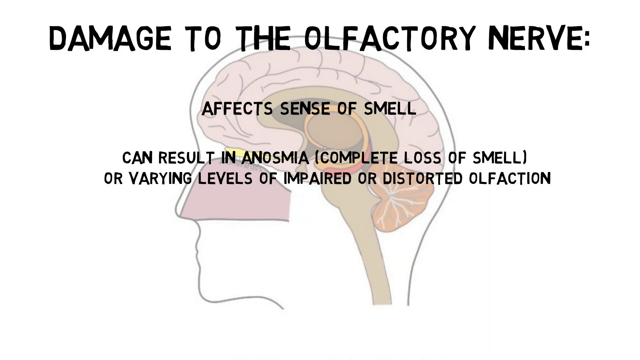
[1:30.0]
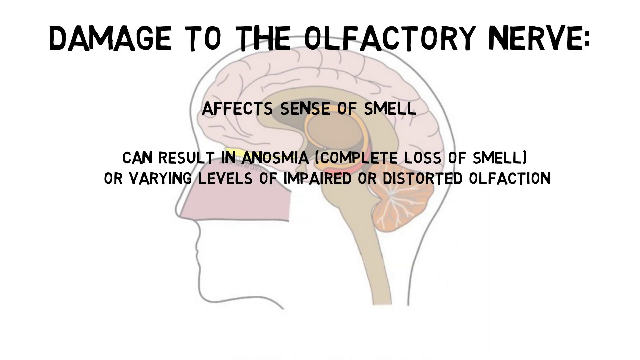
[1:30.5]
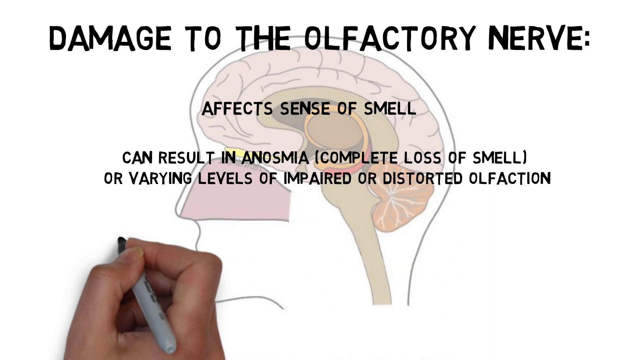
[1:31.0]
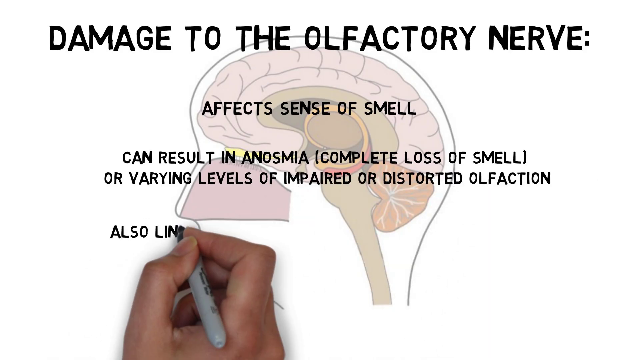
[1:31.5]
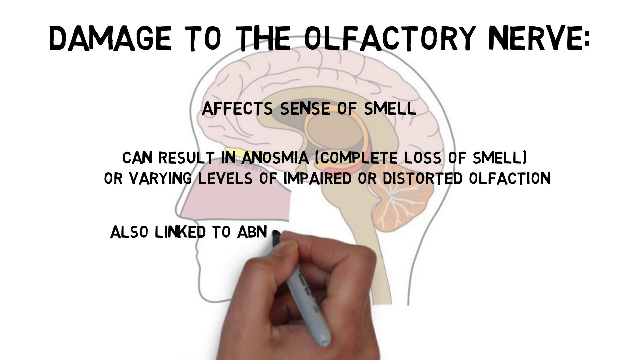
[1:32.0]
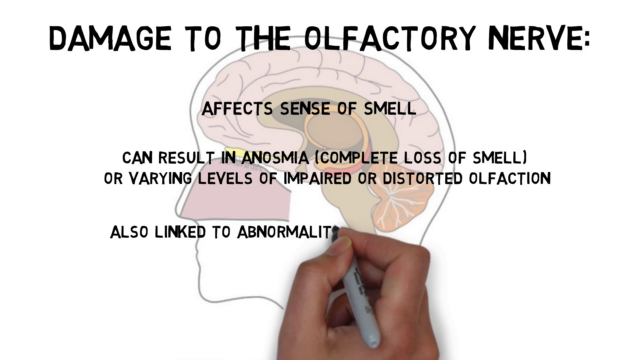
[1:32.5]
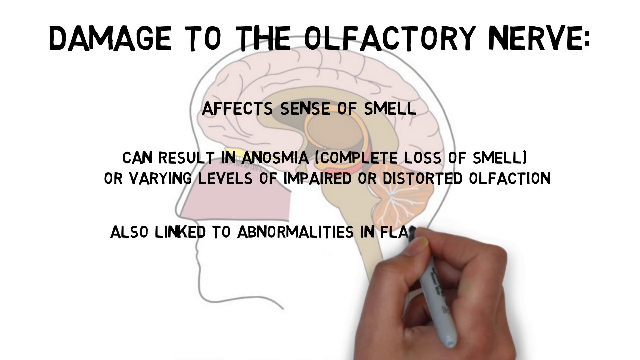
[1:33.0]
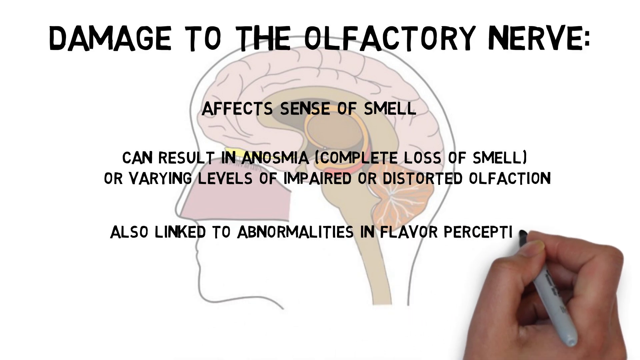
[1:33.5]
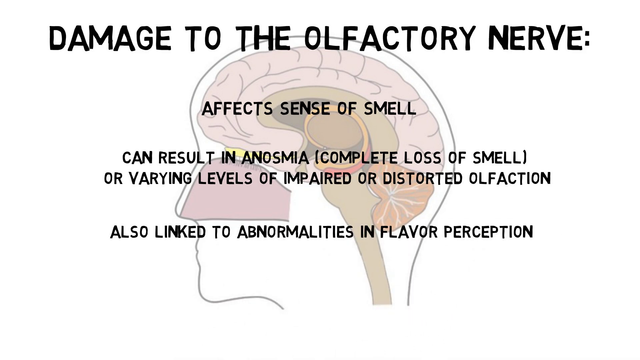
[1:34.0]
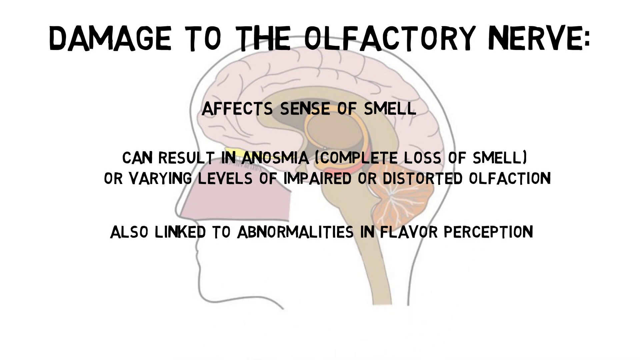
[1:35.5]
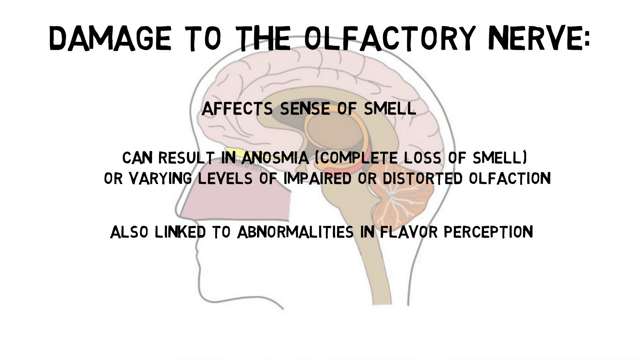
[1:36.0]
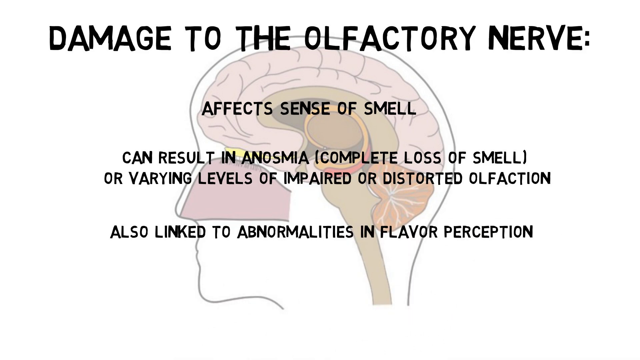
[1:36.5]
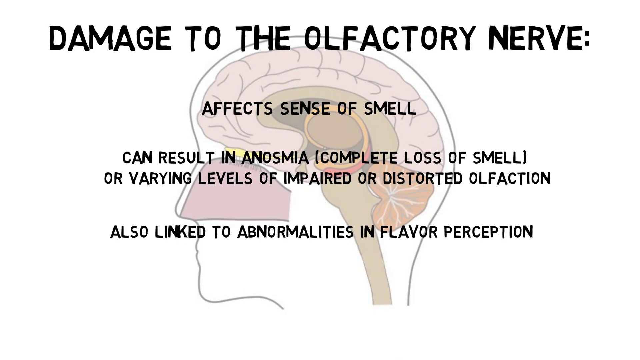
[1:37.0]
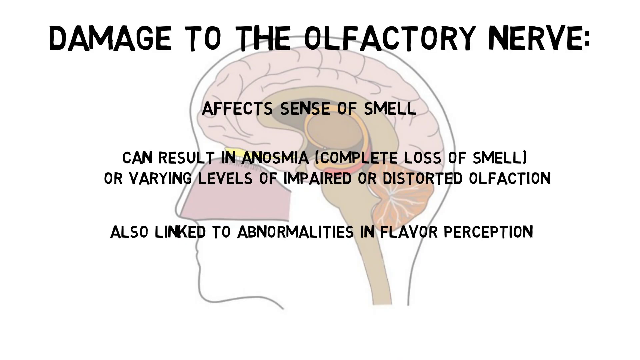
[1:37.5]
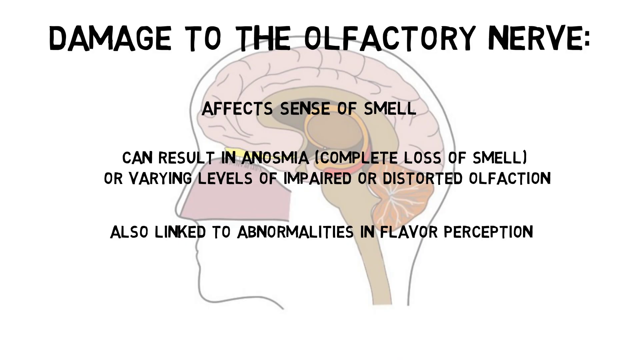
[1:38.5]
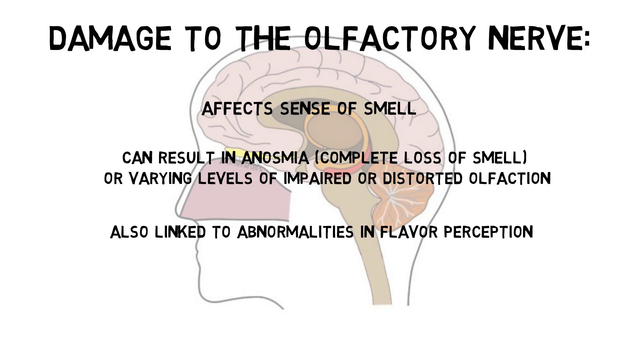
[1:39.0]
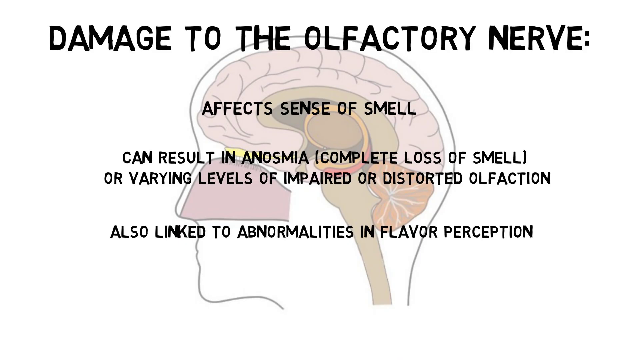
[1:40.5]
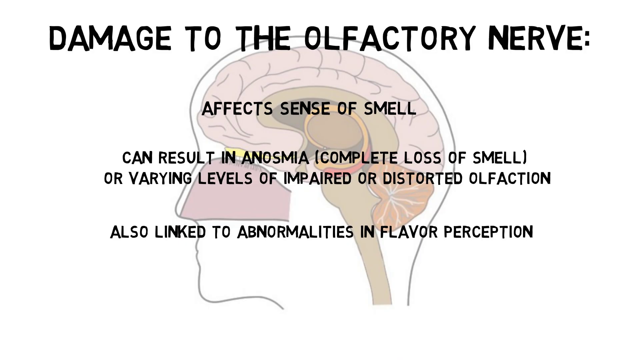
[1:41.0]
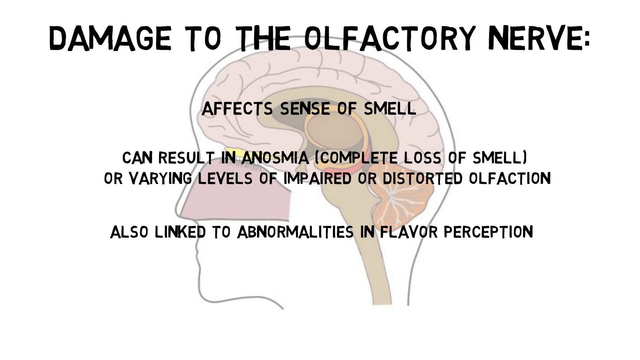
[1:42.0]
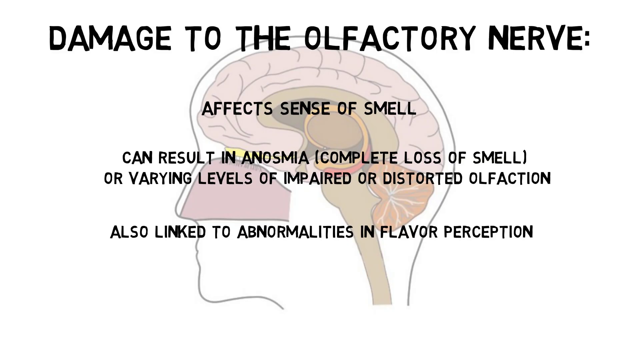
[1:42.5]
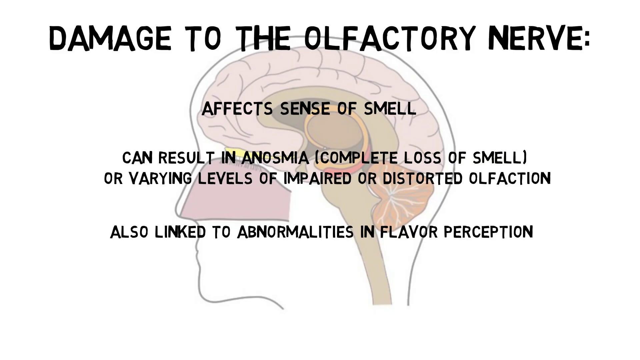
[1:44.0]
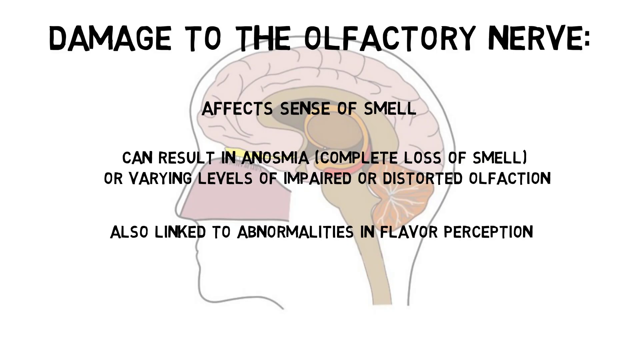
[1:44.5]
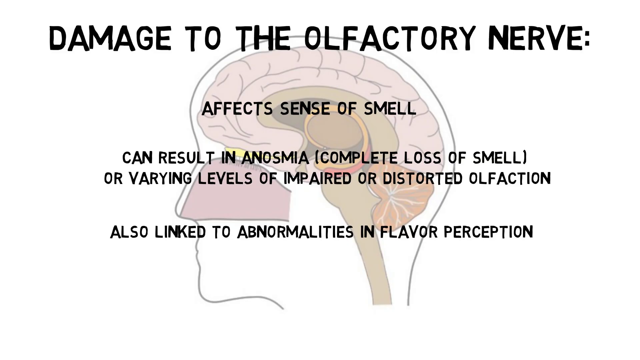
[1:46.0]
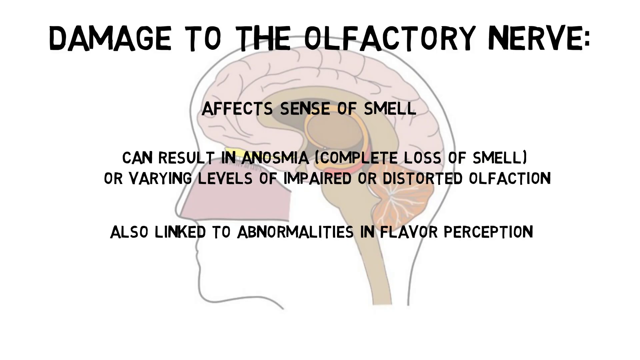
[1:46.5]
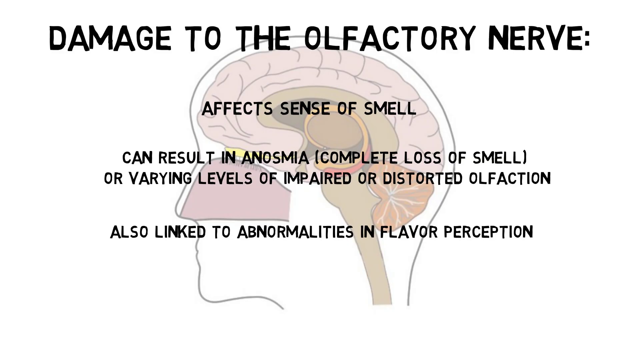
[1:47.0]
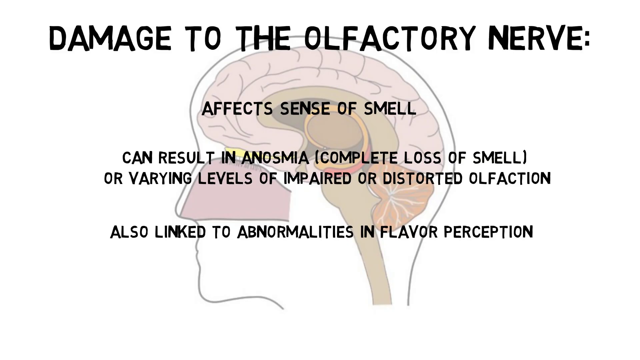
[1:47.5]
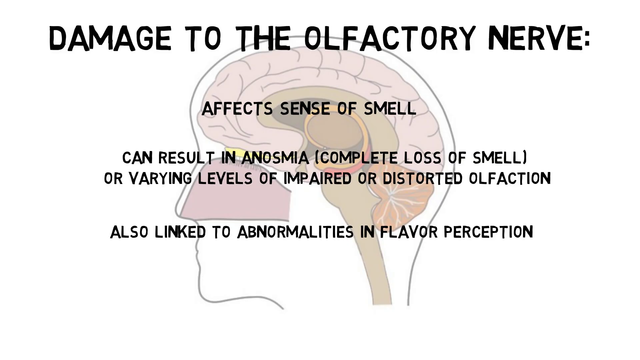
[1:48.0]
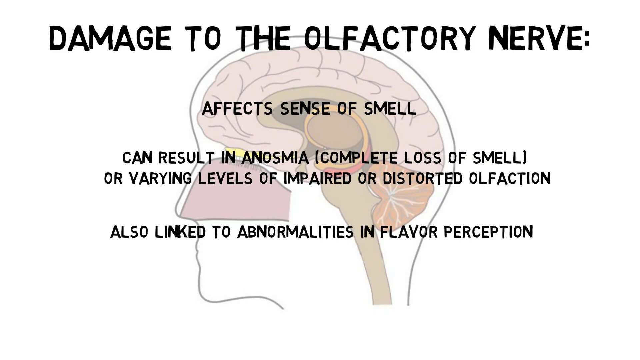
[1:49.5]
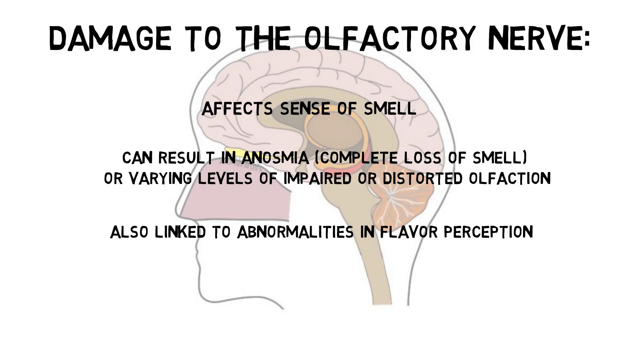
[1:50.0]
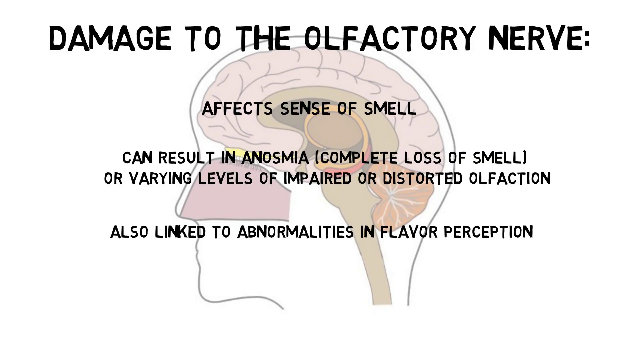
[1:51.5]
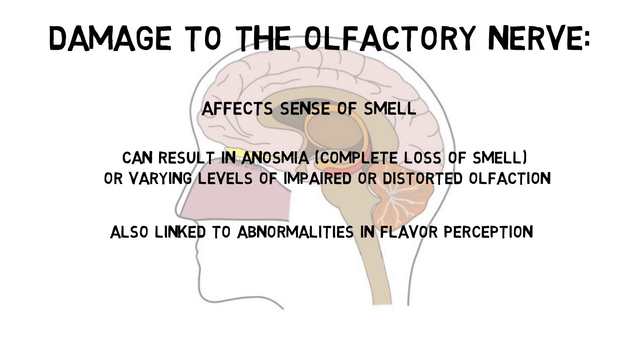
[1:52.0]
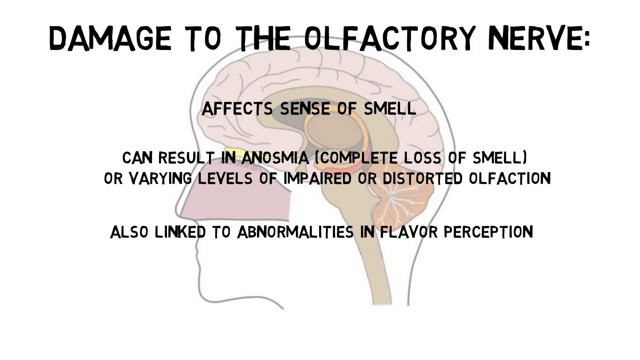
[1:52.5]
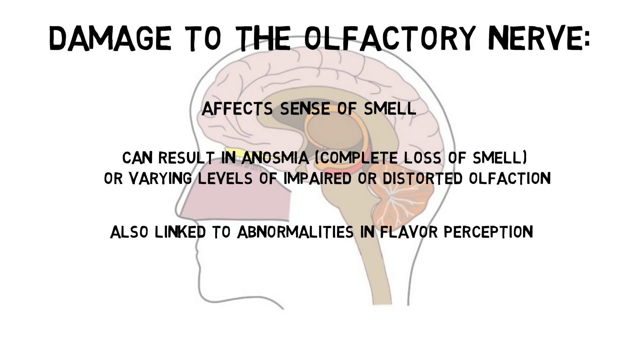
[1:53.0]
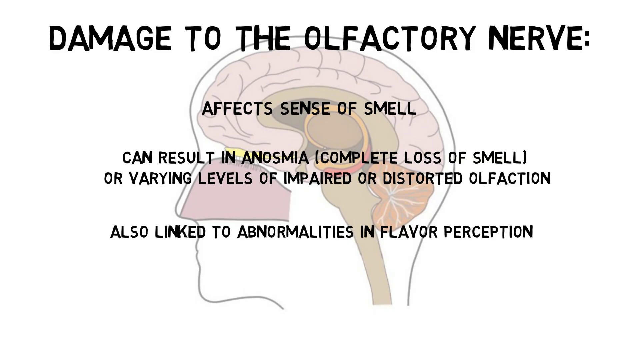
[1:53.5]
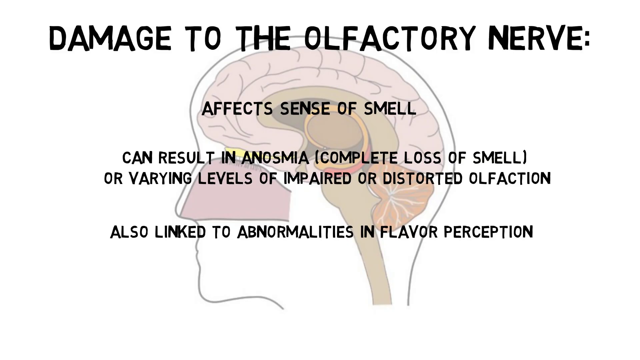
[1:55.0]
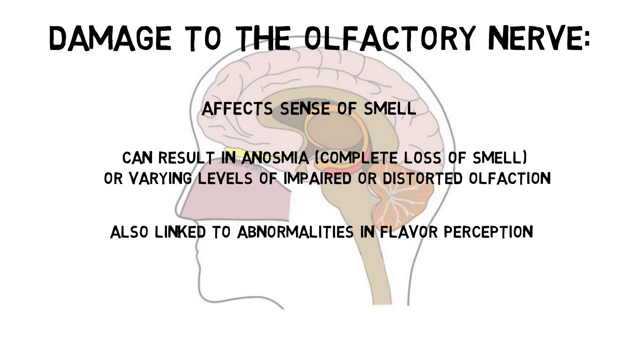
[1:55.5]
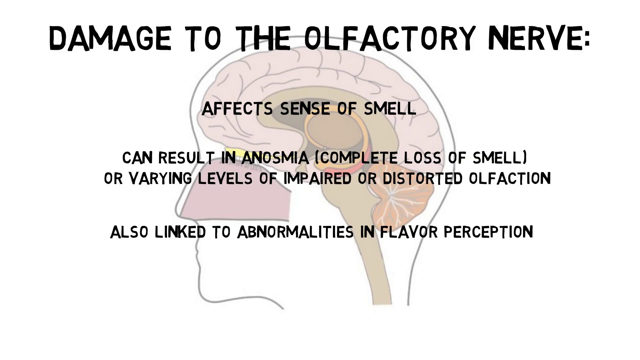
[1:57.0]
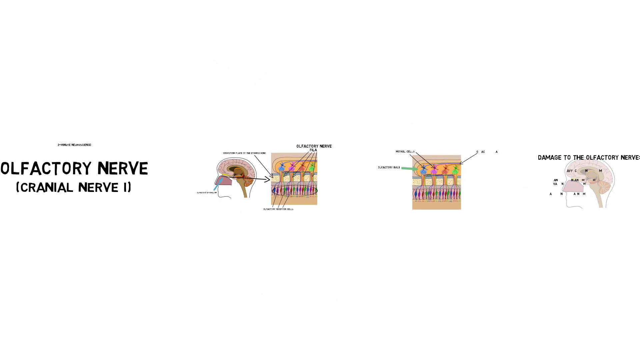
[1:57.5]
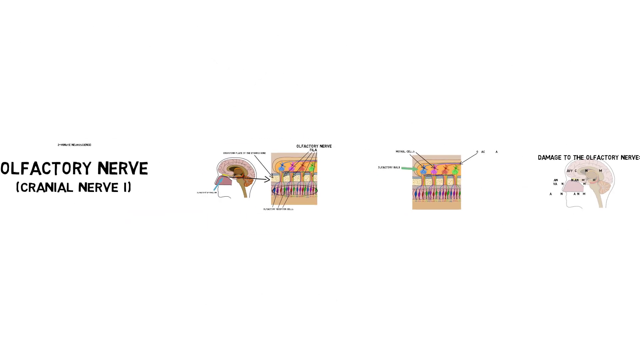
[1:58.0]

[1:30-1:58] The topic of damage to the olfactory nerve continues: it affects the sense of smell, can result in a complete loss of smell or varying levels of impaired or distorted smell, and is also linked to abnormalities in flavour perception.